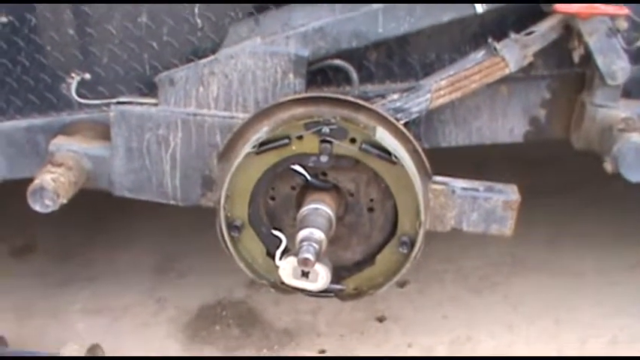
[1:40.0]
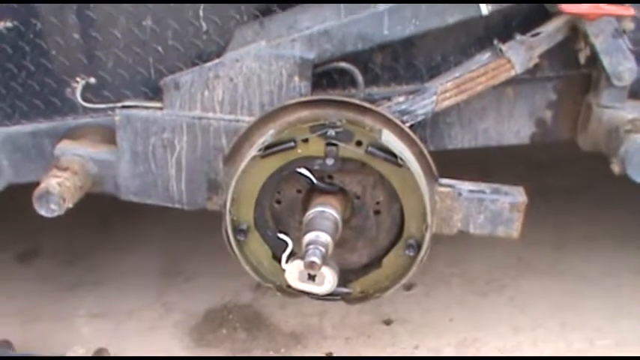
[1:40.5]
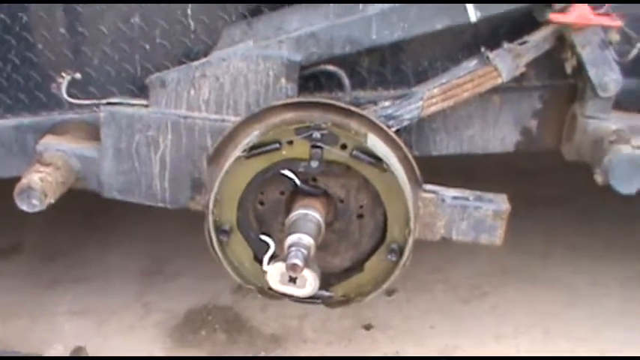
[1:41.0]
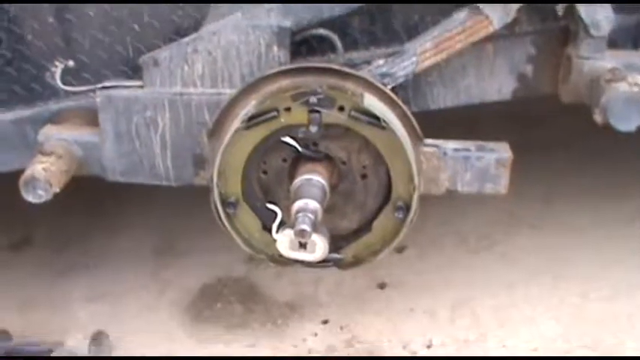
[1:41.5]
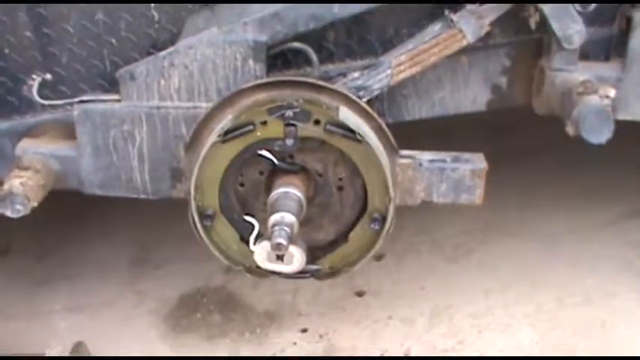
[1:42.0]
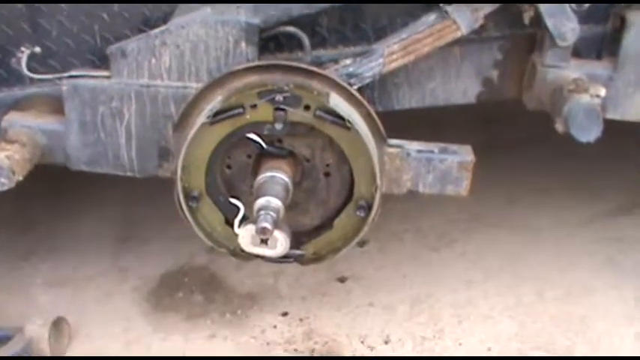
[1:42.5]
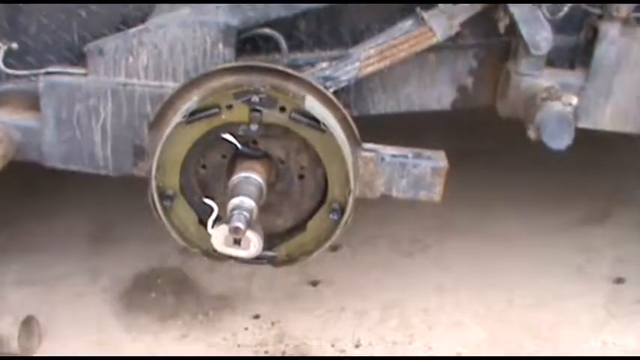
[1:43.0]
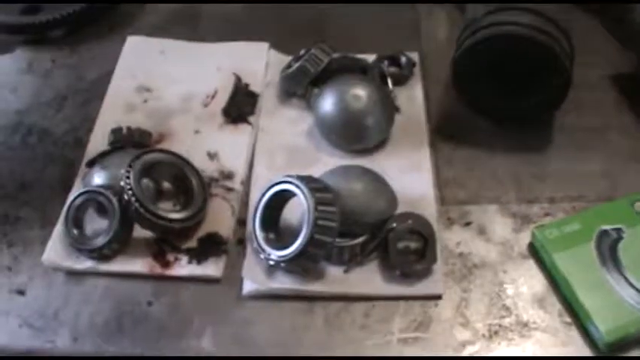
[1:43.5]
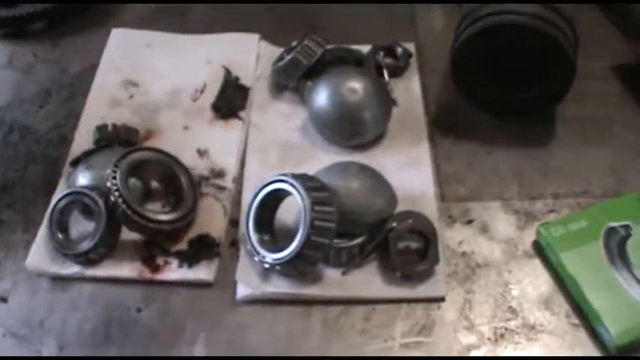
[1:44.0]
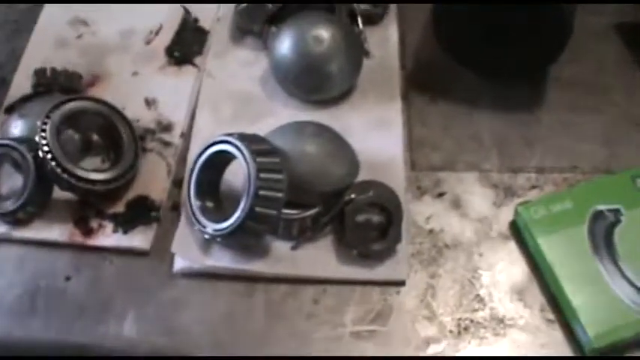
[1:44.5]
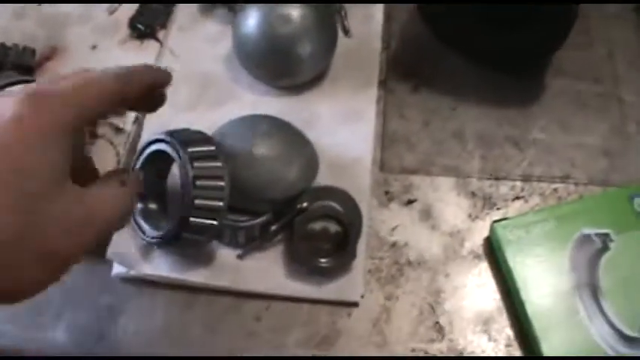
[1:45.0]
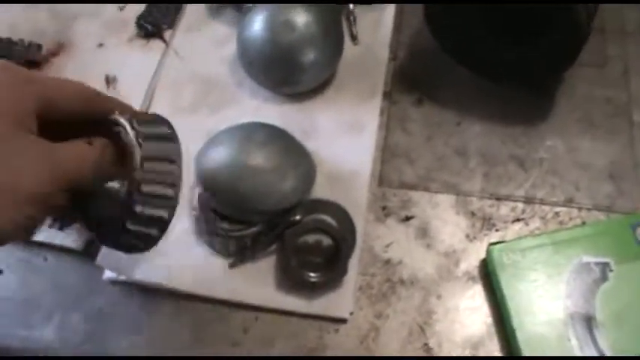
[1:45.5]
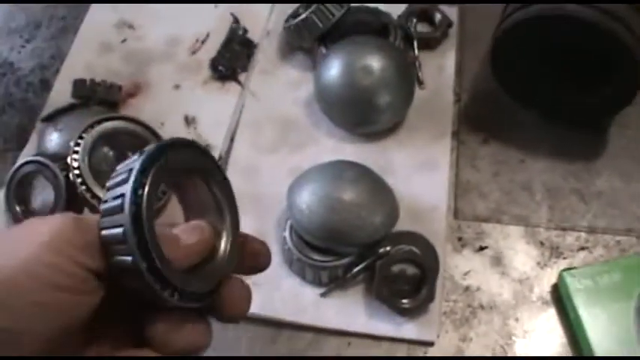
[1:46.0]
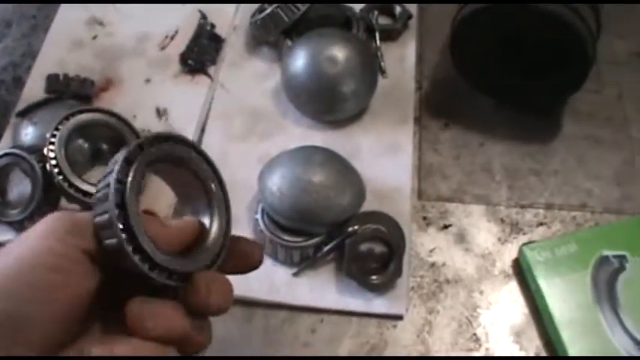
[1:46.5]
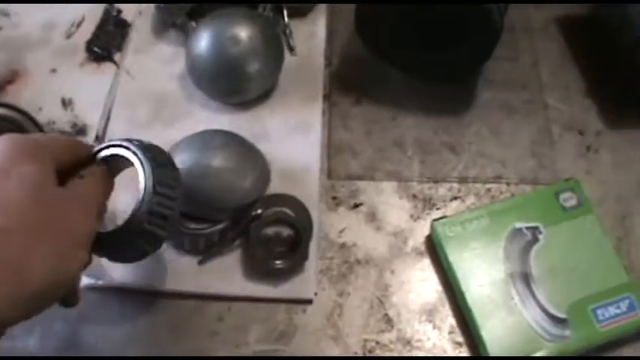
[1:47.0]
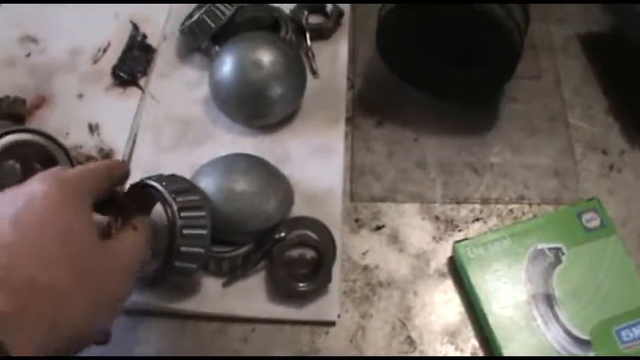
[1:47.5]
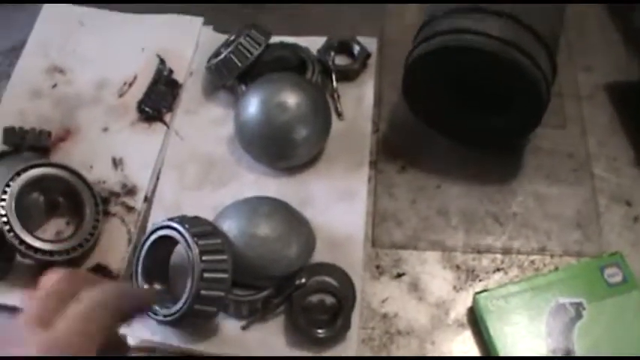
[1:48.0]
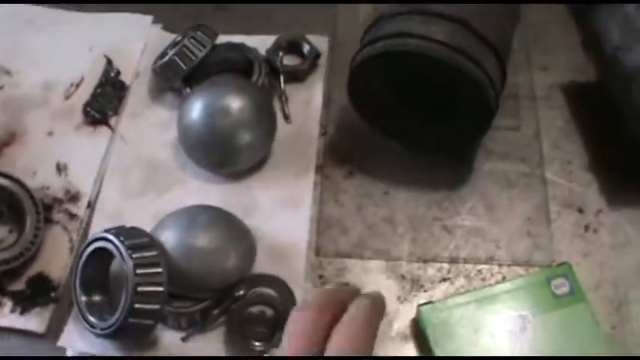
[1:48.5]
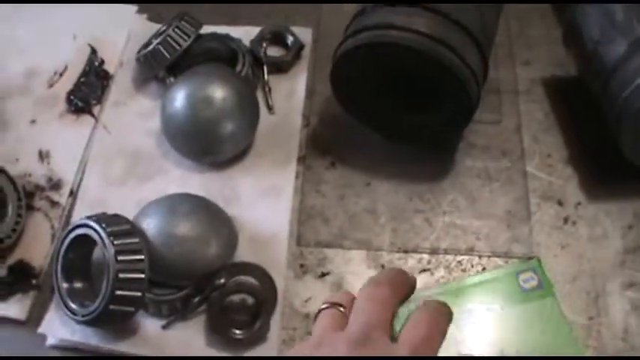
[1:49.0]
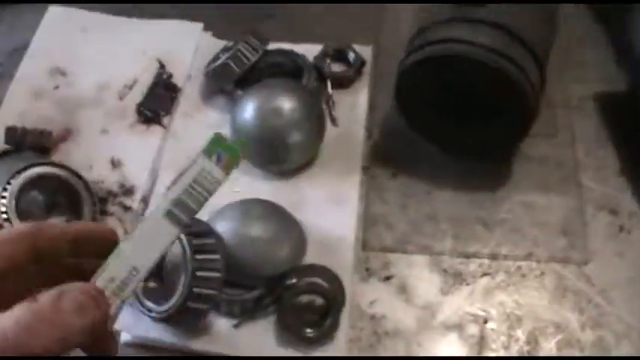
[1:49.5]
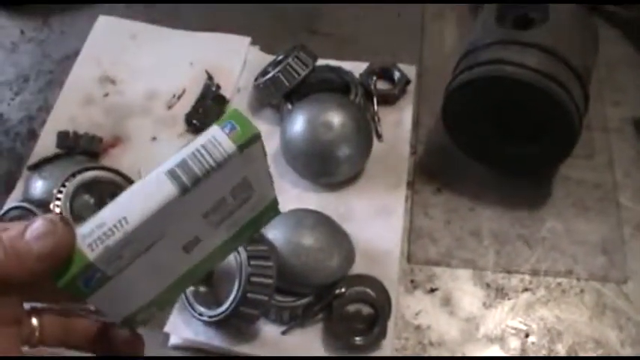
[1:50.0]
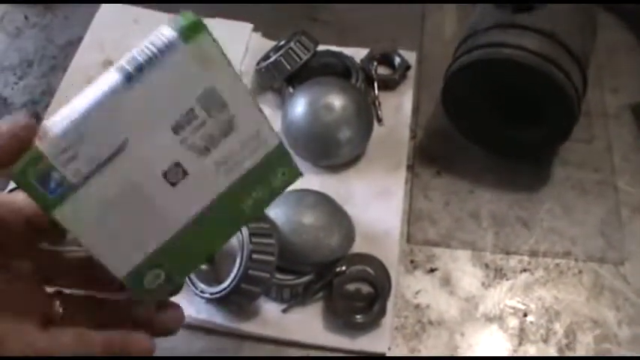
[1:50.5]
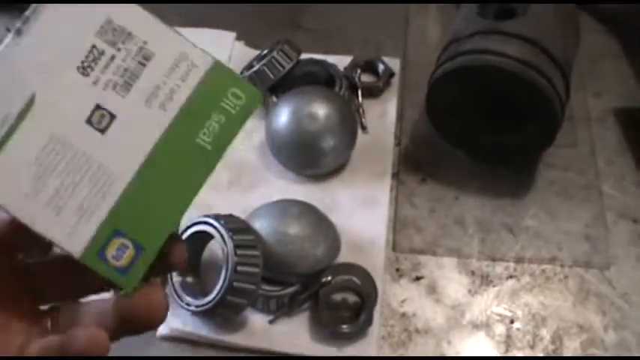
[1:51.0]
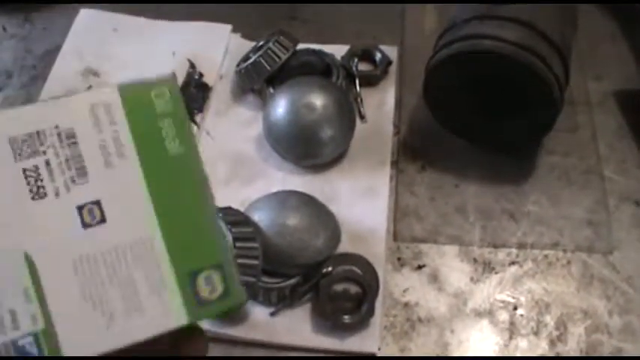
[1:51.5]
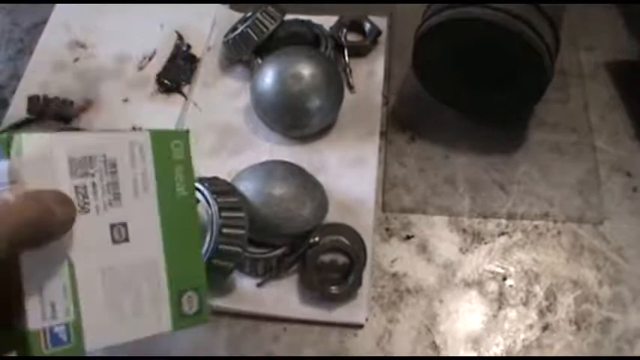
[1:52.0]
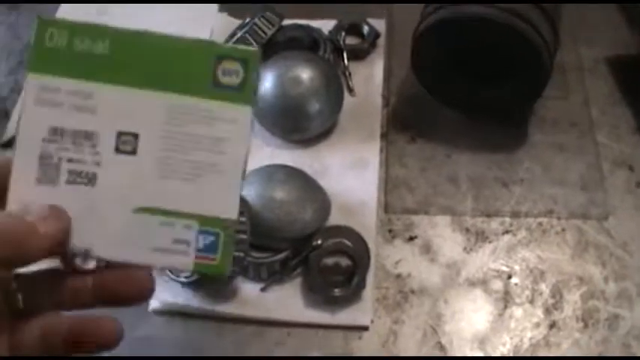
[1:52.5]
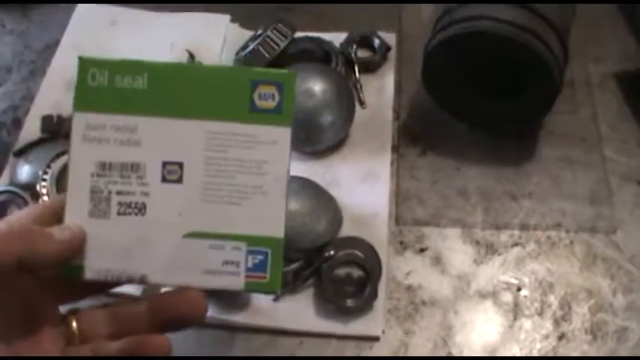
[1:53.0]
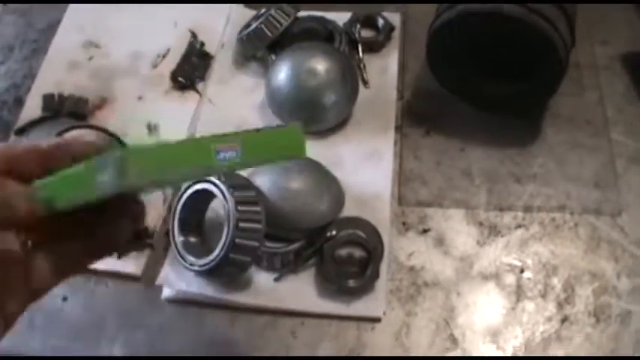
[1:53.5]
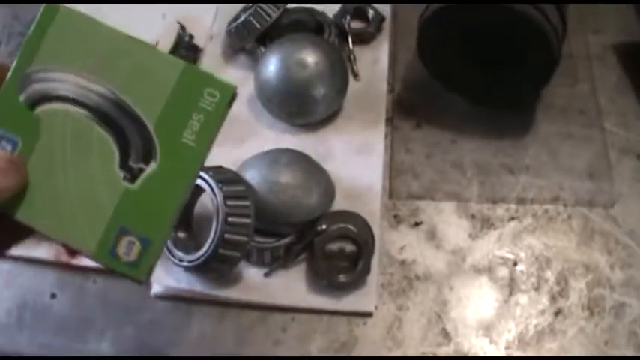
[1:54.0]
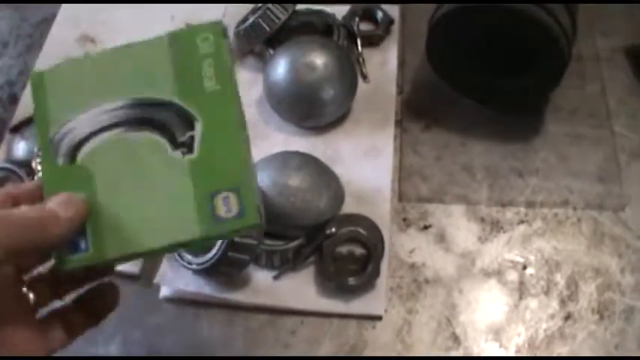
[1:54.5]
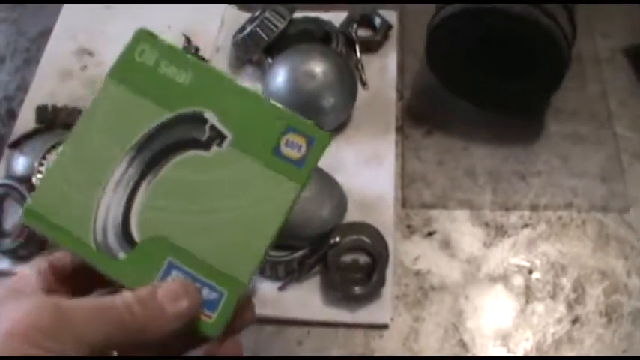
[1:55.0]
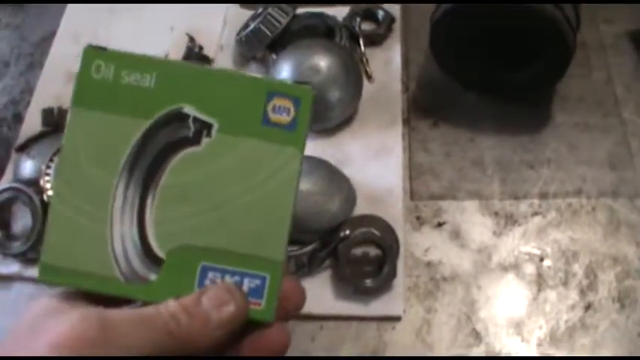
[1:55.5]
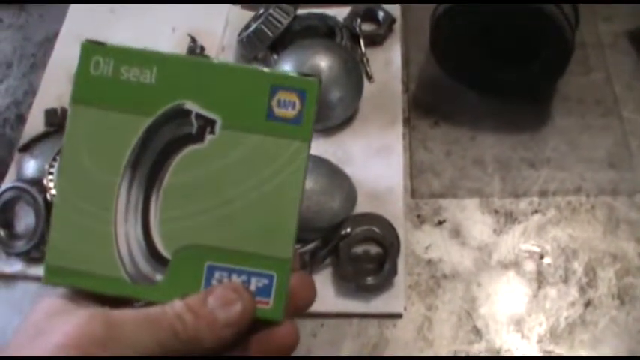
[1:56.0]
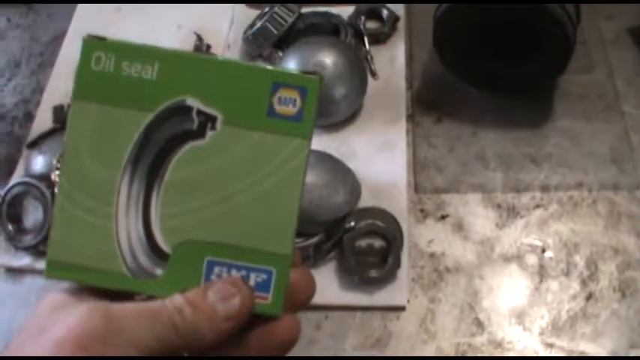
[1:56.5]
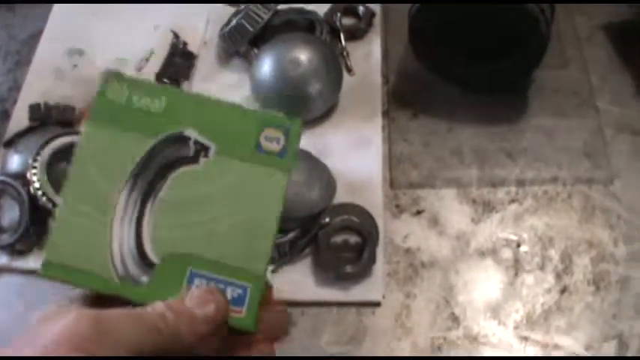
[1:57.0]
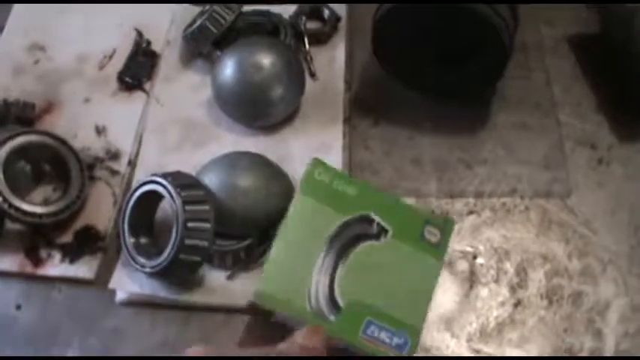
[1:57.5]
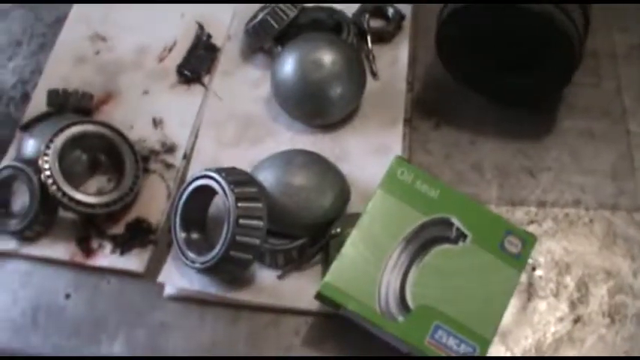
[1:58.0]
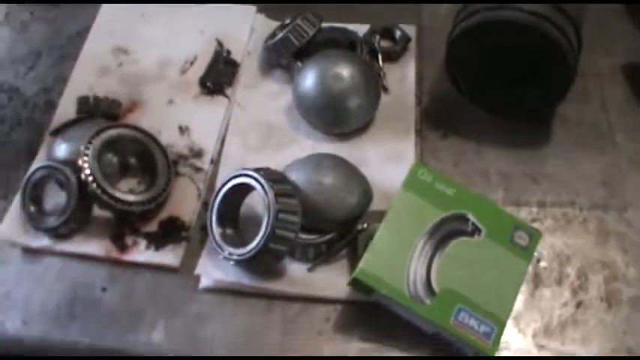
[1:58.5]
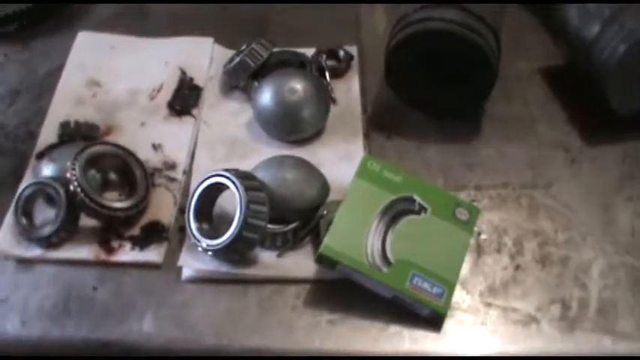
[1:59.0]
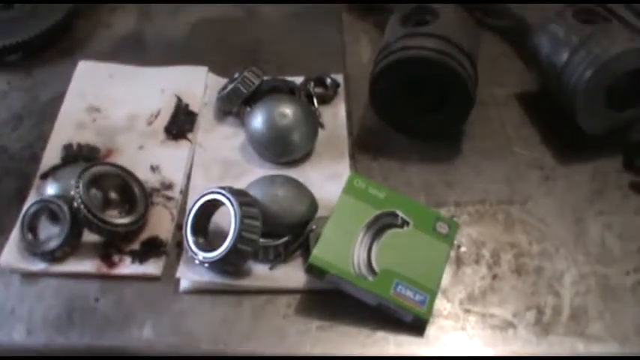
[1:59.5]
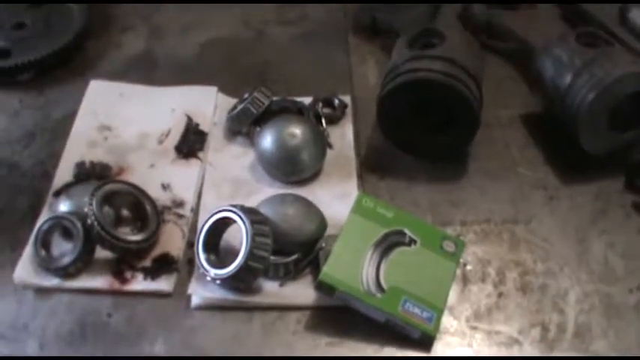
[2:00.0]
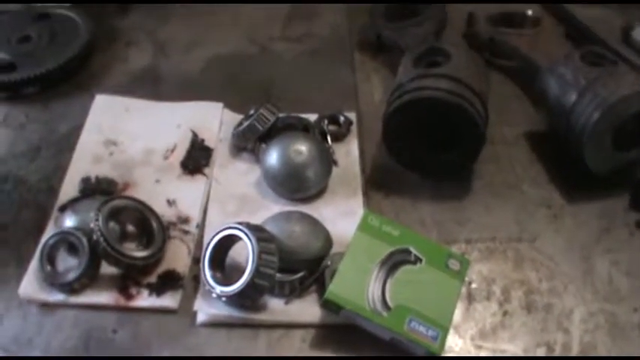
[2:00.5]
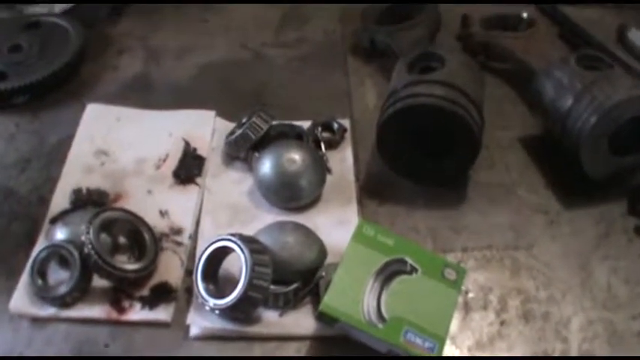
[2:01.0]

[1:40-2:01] The wide shot of the left one that the tire attaches to continues, with the camera shaking a little, a few snowflakes, and the concrete with some dirt on it underneath. The scene then changes to what looks like a wooden surface. There is some black gear in a top corner, some sort of black cylinder toward the top right, and a green box in the bottom right. Two white rags are there, one in the center and the other to its left, with some metal parts down in the left corner. The left rag has a couple of really big spots of grease and oil; the one on the right has two pieces like the underside of a bowl, one at the top and one at the bottom, plus a couple of gears and a couple of big bolts. The camera zooms in toward the right side as a man picks up a round piece with little edges, ripples on the sides for grip, and lays it back down. Using his left hand, he picks up the green box and flicks it over to show the back: the top border is green and the rest is white. He spins it upright; it says "oil seal" with the Napa logo on the right, and below that is white with a bunch of information that is blurry and hard to make out. He flips it to the front, which says "oil seal" on the top left and Napa on the right, with an image of the silver oil seal in the middle. His thumb is on the front and fingers behind as he holds it, then he tosses it back down, half covering one of the pieces of metal on the right side cloth.